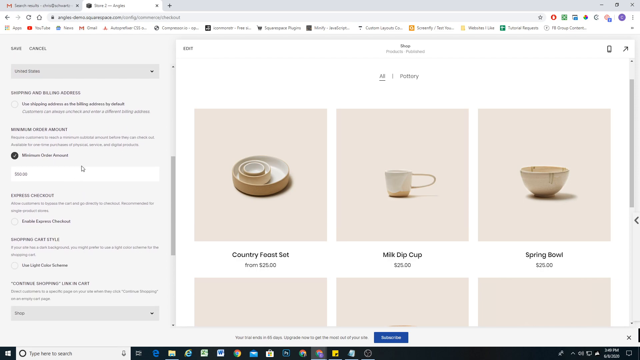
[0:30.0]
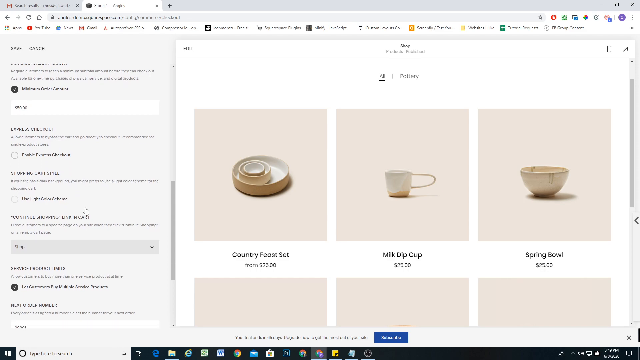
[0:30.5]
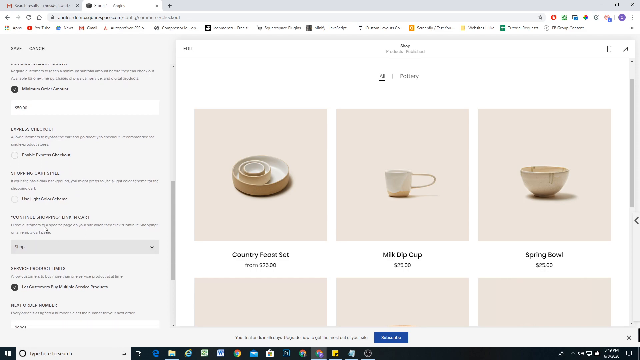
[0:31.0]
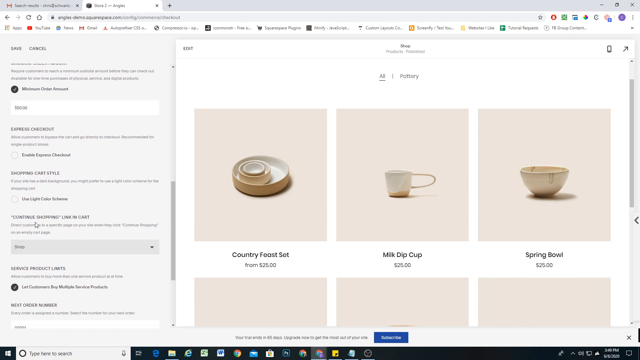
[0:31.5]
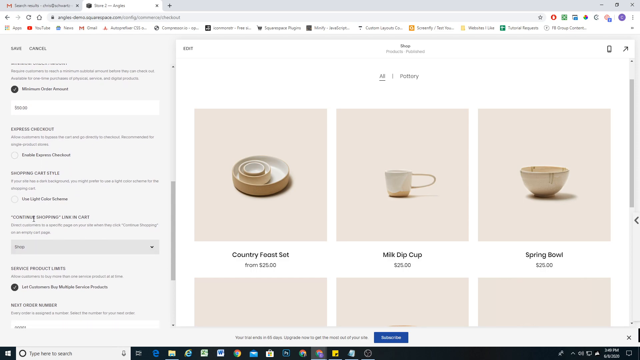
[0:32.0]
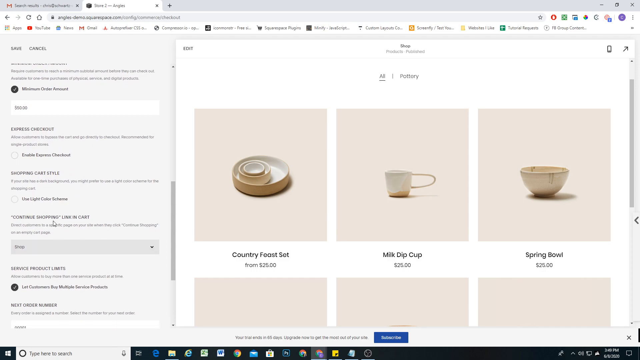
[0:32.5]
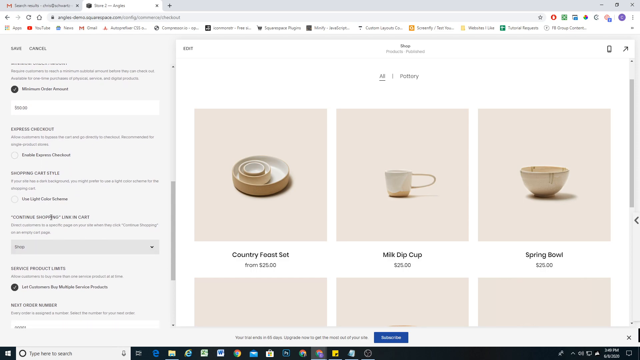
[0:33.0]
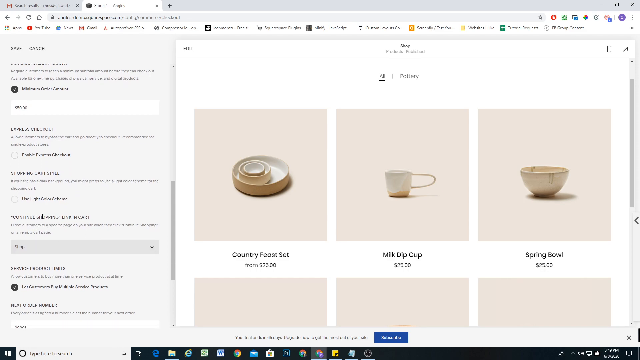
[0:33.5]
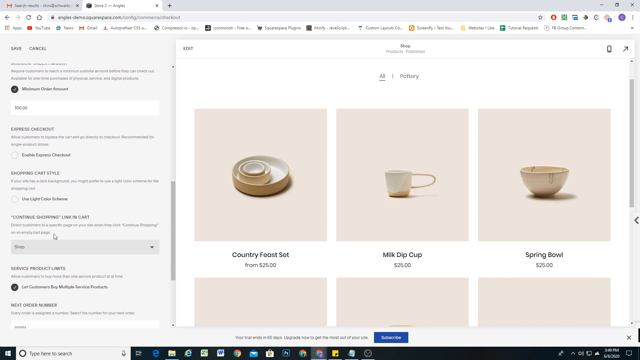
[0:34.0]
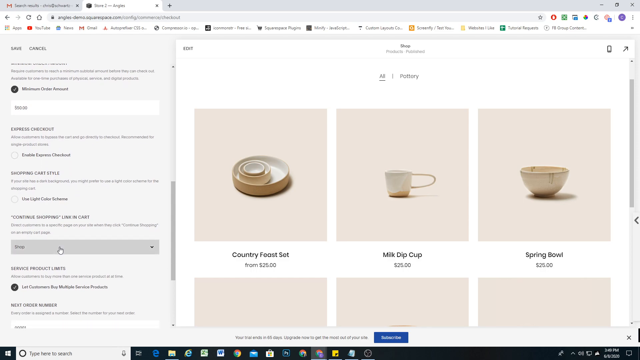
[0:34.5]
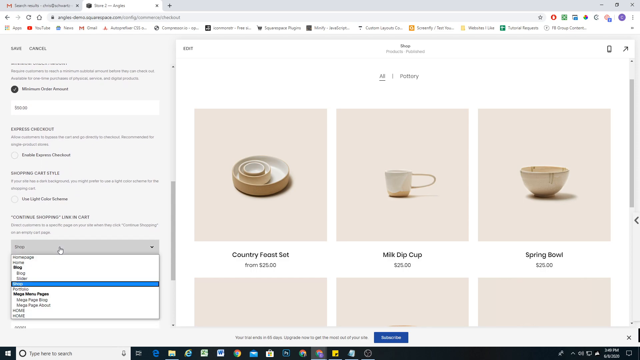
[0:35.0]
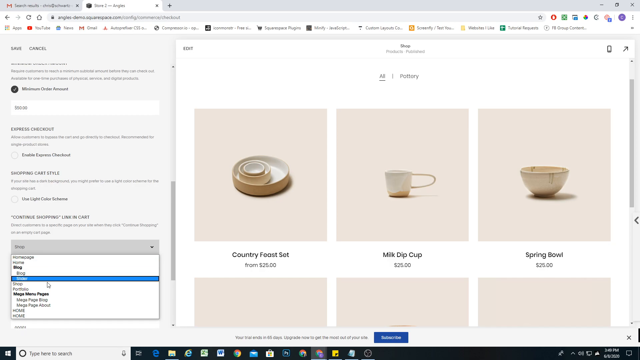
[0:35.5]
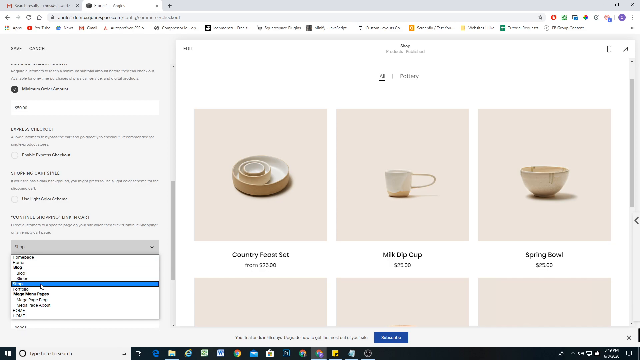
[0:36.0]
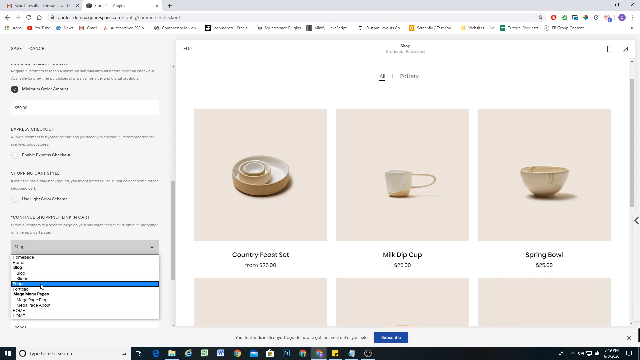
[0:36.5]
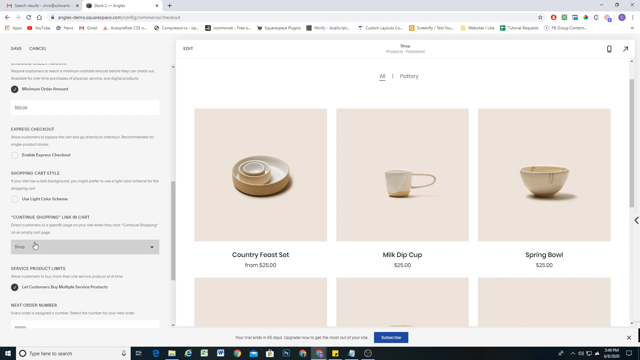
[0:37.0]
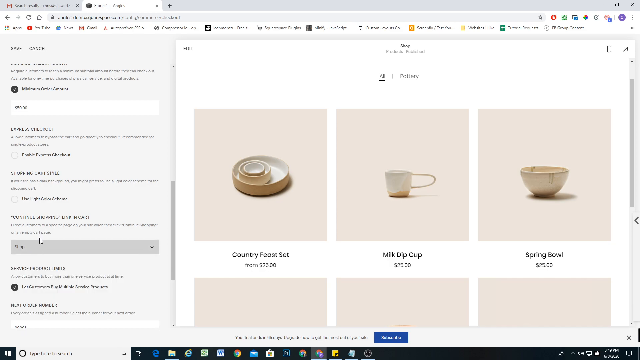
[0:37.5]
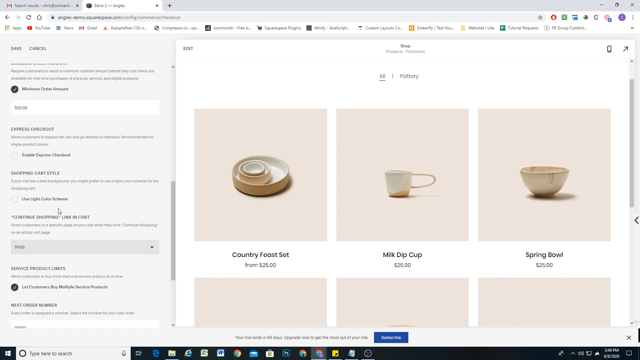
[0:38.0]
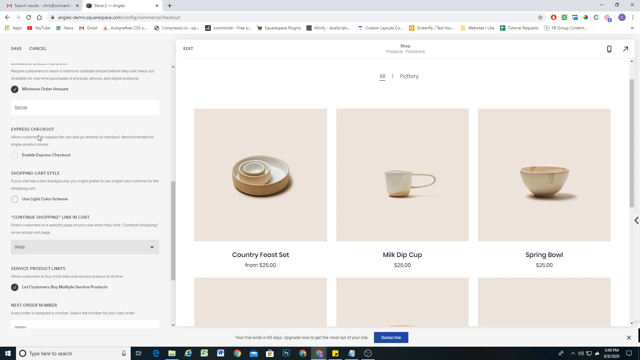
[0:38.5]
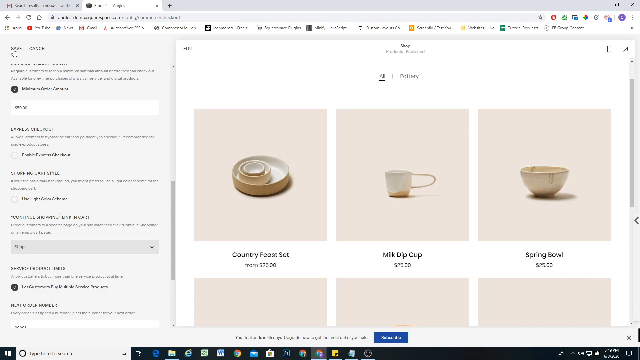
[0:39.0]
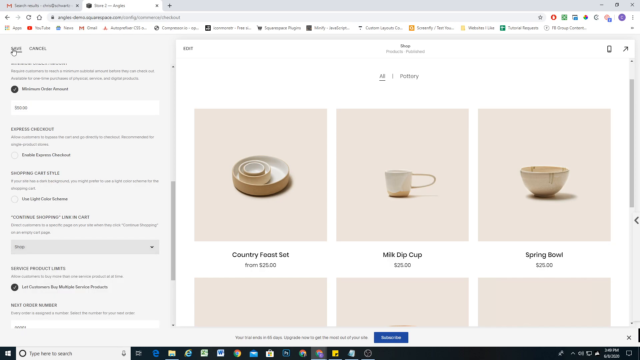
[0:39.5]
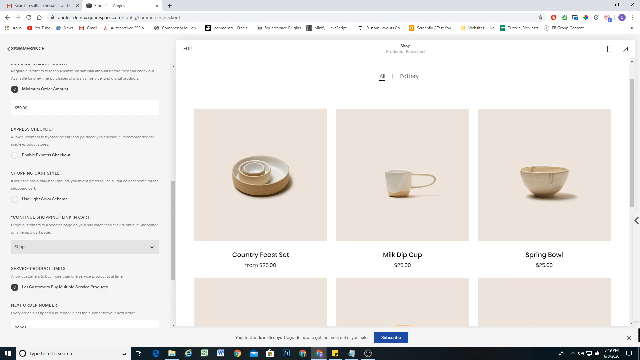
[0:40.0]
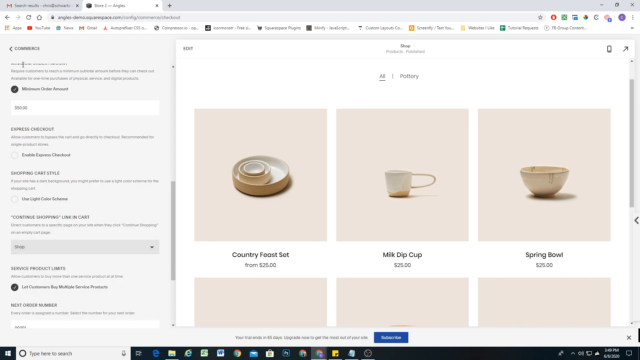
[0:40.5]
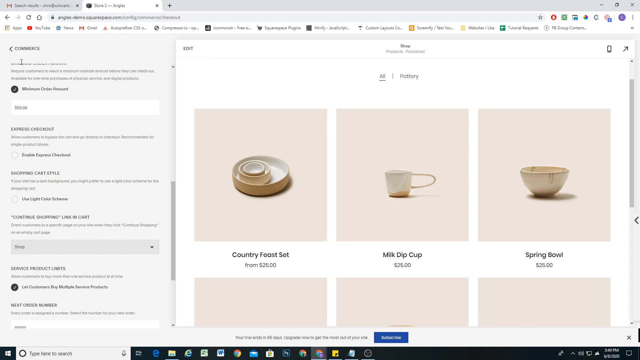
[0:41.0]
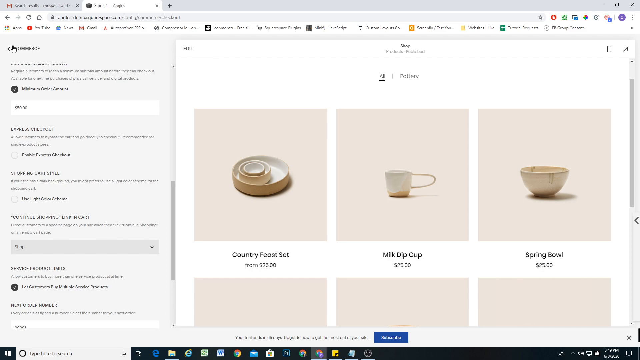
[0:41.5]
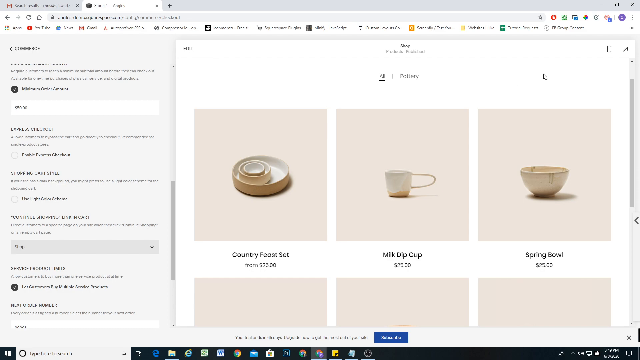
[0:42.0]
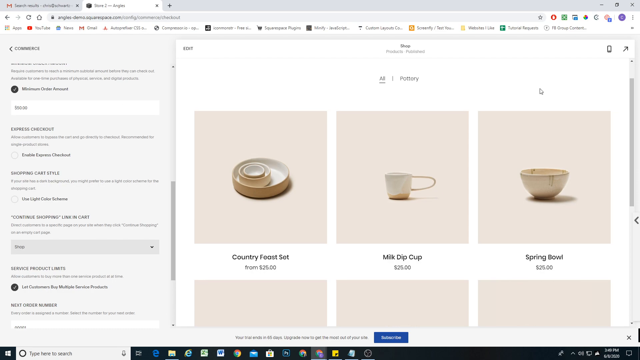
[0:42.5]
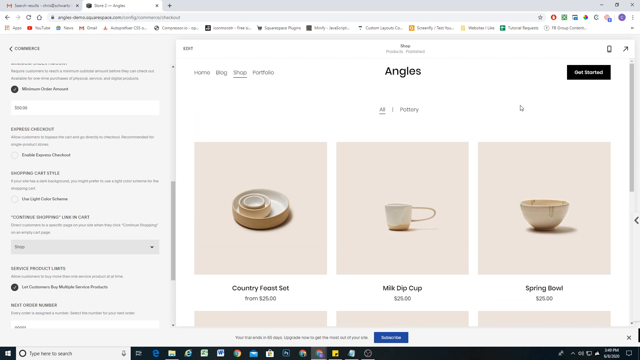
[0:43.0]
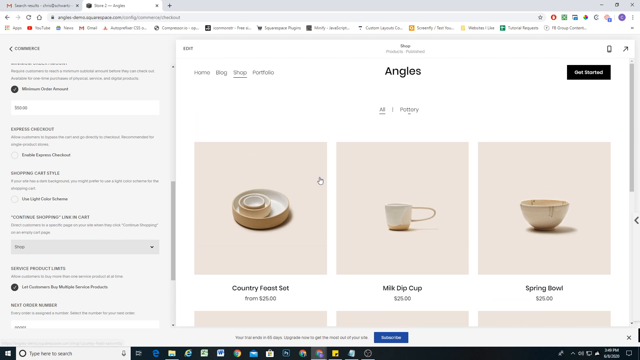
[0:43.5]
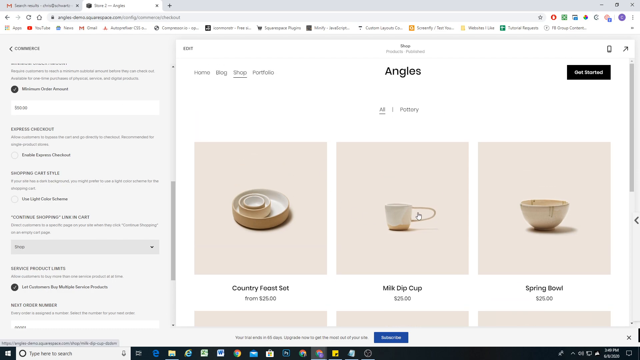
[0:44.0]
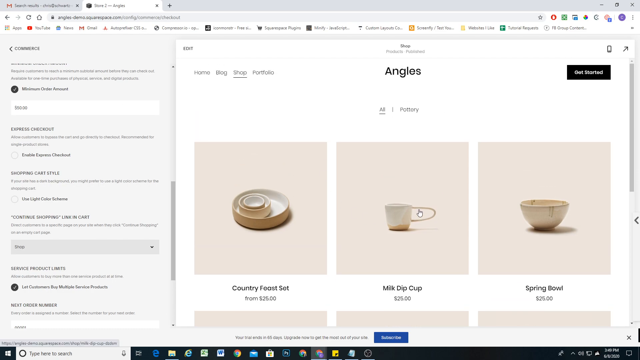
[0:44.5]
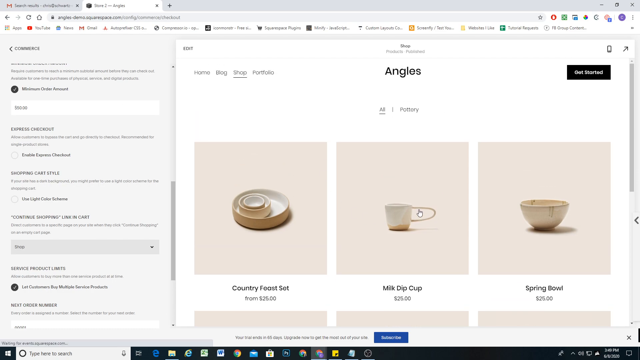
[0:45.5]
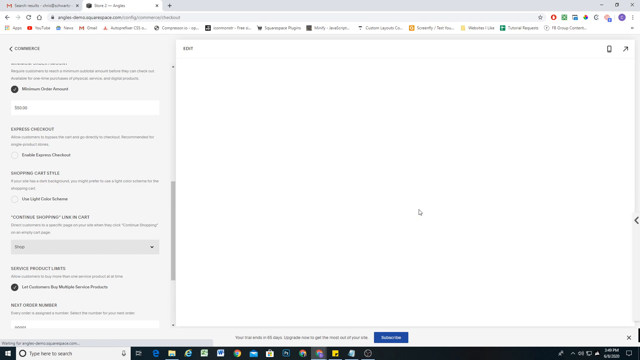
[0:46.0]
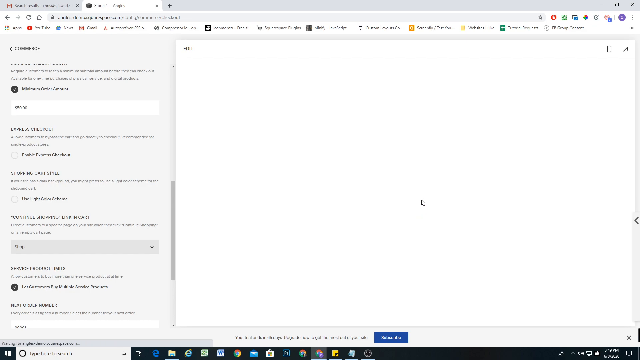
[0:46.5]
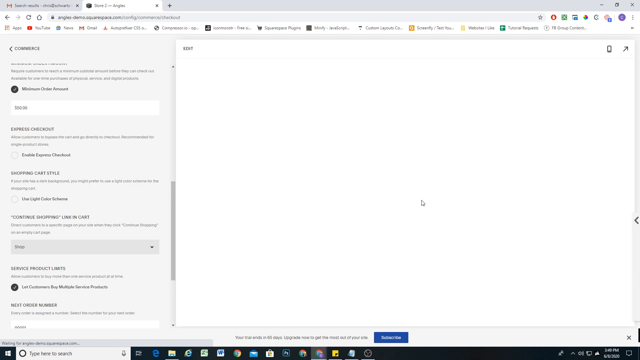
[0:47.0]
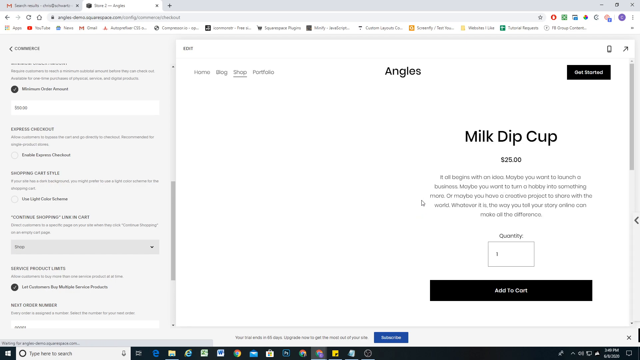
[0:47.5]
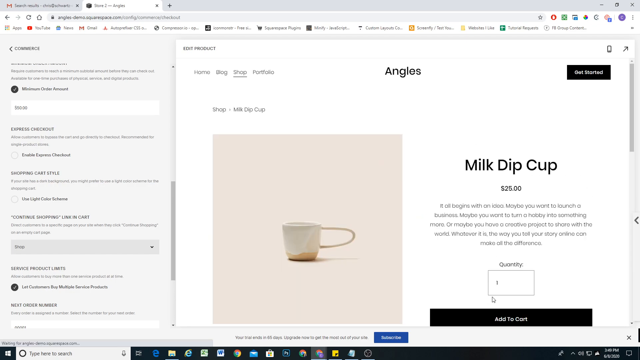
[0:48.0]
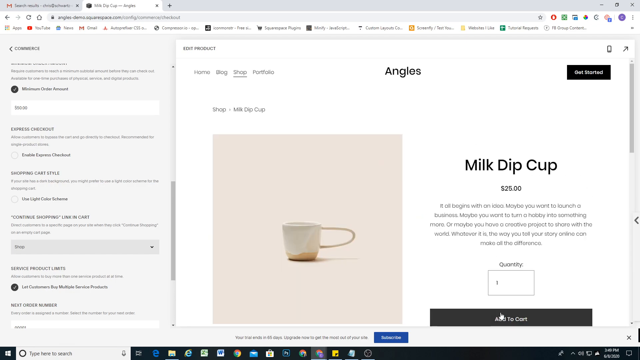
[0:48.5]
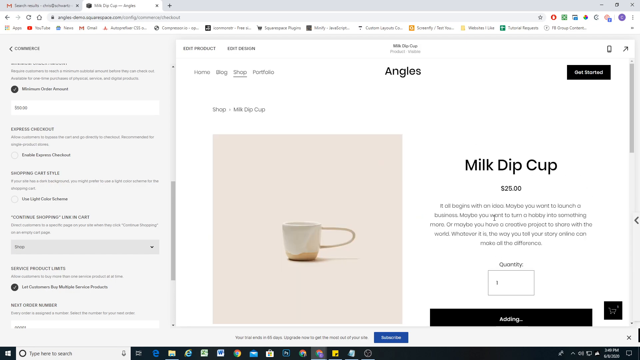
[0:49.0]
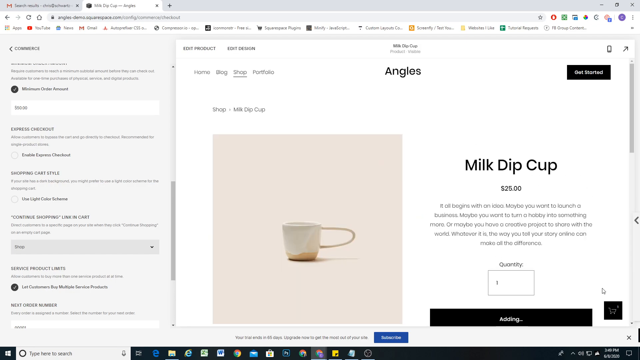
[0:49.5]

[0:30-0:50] The white screen with the Feast Set, Milk Dip Cup, and Spring Bowl continues, with the mouse hovering over the left side of the screen. Text is typed into a form in the middle of a body of black text on a white background. The mouse hovers and scrolls down, then selects an item from a drop-down menu. The web page is scrolled on the right side, and scrolling up reveals a title, "Angles," with menu items reading "Home," "Blog," "Shop," and "Portfolio." On the right side, white text reading "Getting Started" is printed over a black box. Milk Dip Cup is selected, opening a page with a large picture of the Milk Dip Cup and an option to add it to the cart.